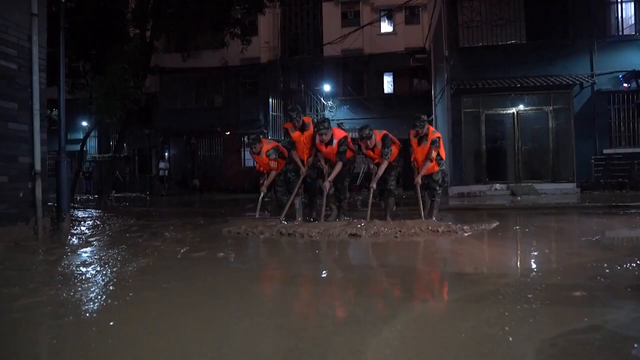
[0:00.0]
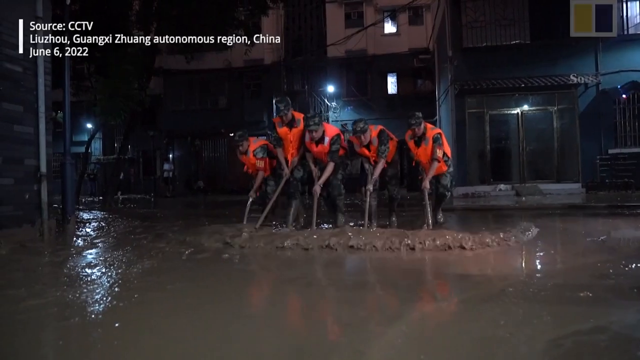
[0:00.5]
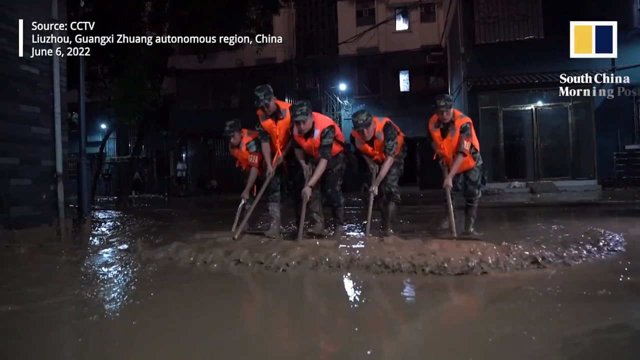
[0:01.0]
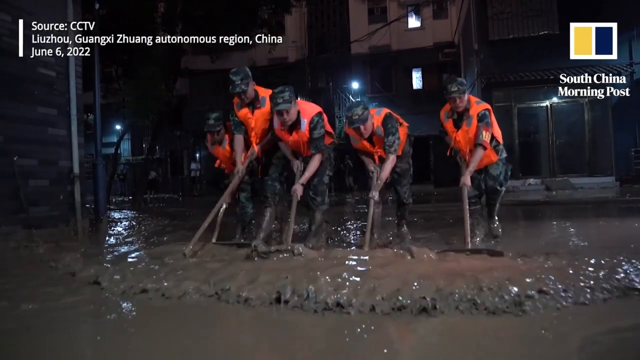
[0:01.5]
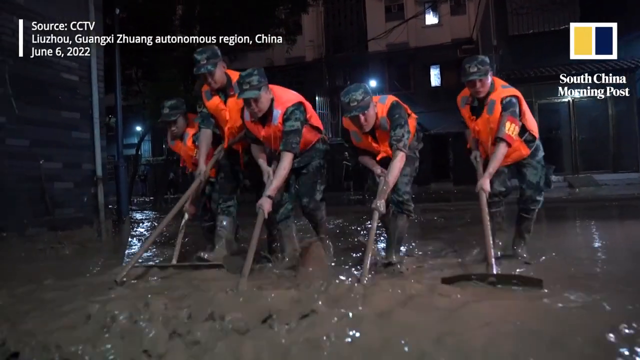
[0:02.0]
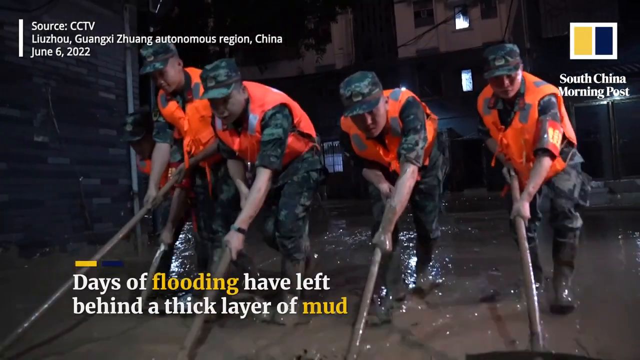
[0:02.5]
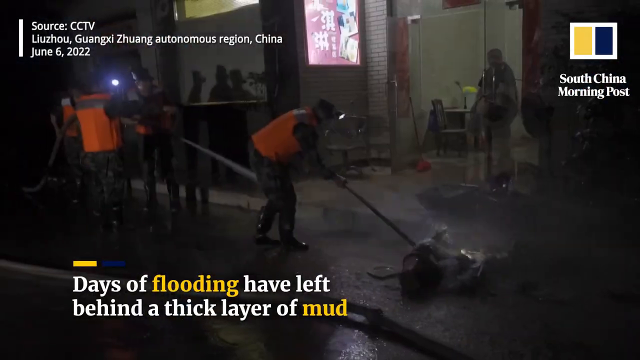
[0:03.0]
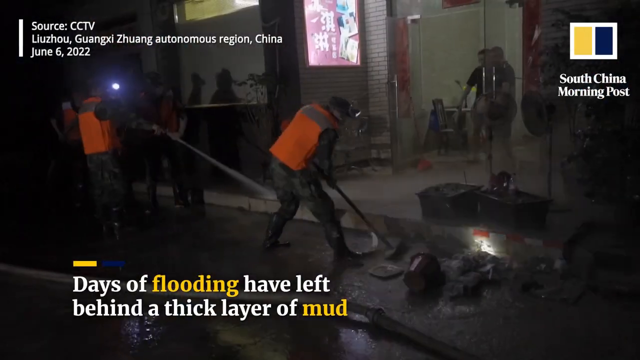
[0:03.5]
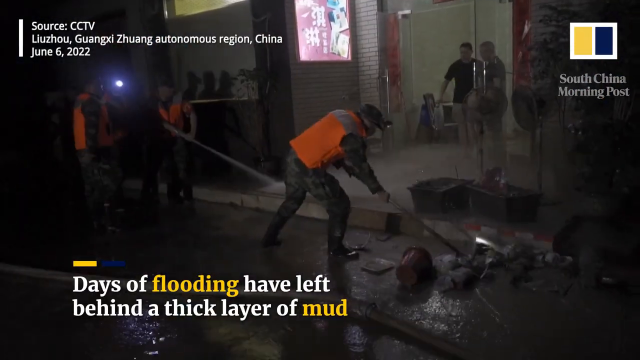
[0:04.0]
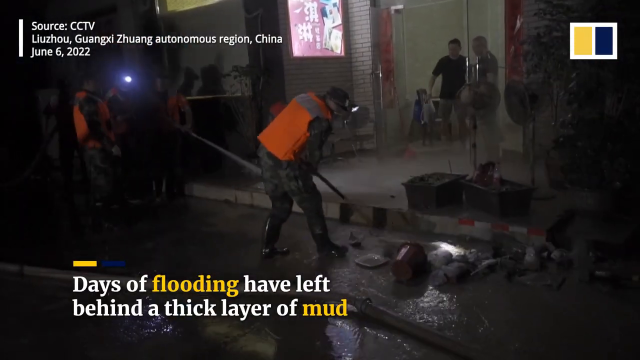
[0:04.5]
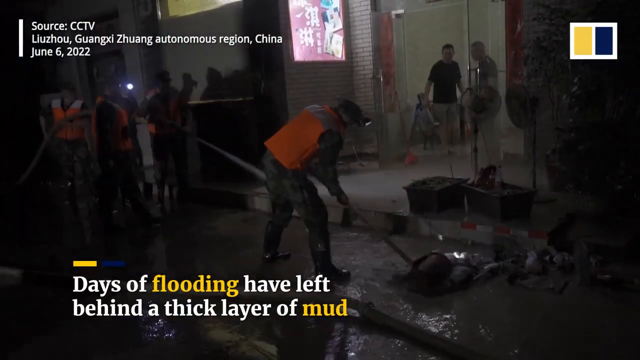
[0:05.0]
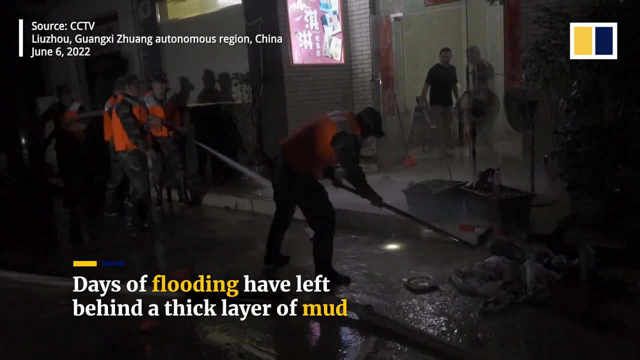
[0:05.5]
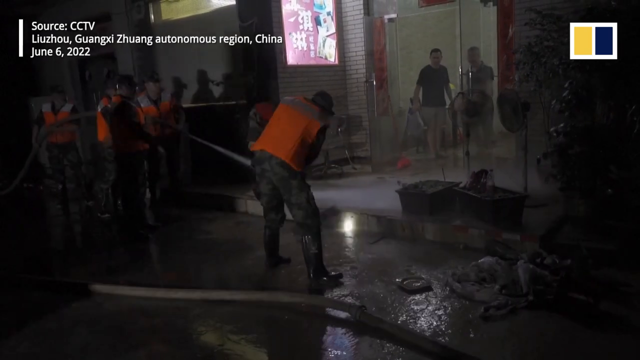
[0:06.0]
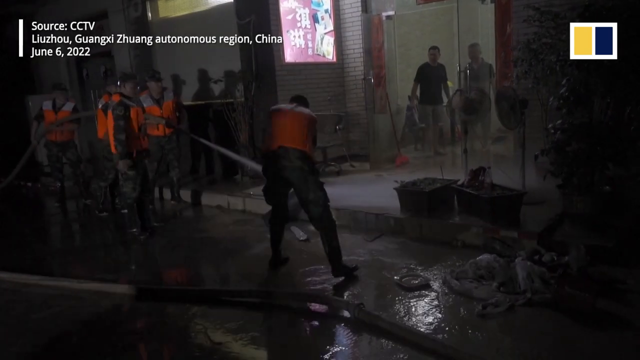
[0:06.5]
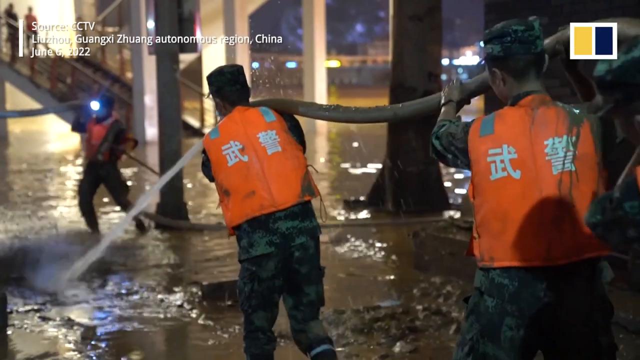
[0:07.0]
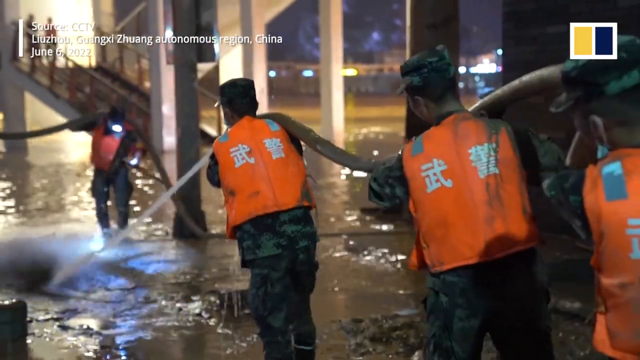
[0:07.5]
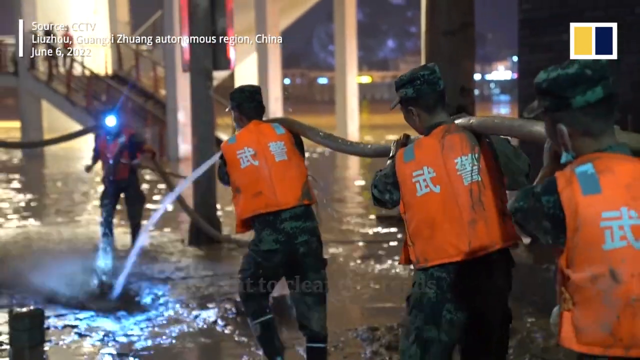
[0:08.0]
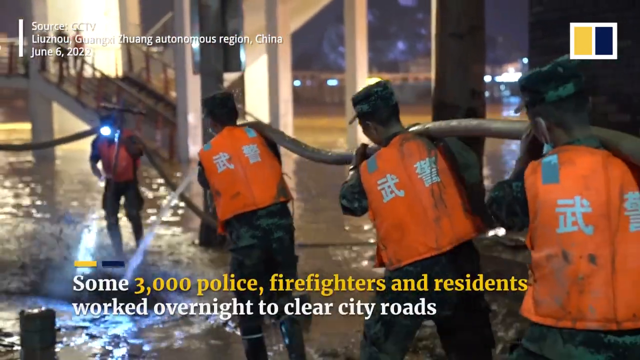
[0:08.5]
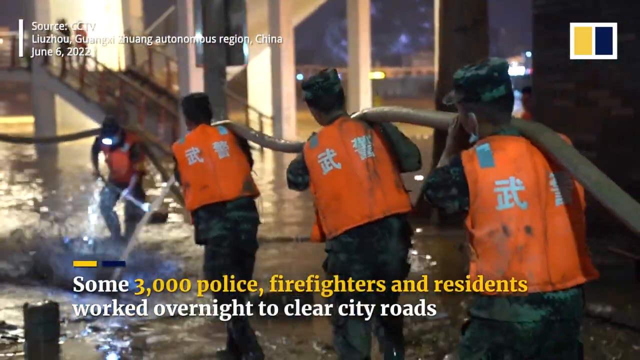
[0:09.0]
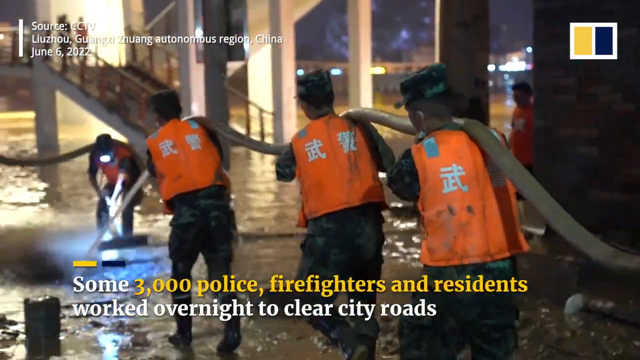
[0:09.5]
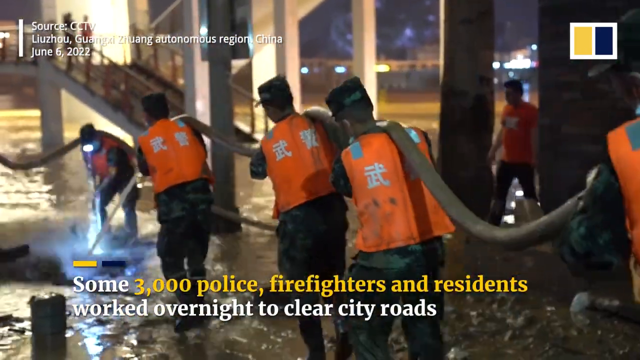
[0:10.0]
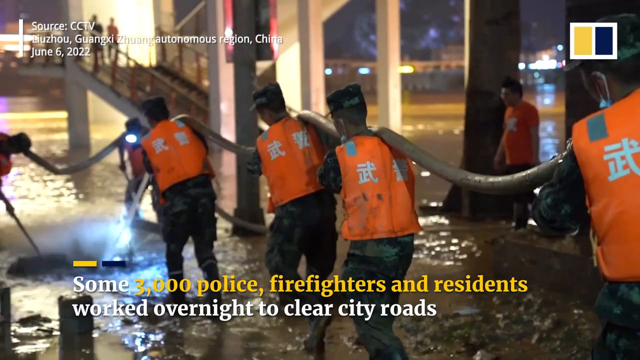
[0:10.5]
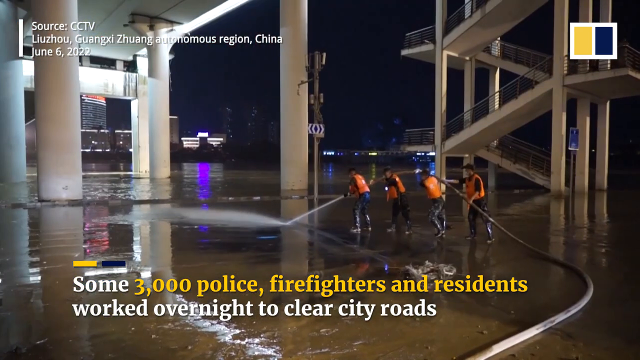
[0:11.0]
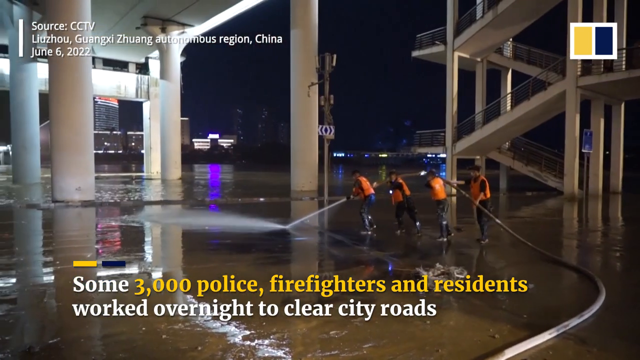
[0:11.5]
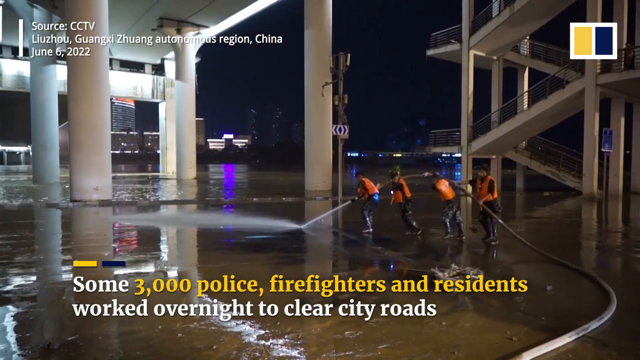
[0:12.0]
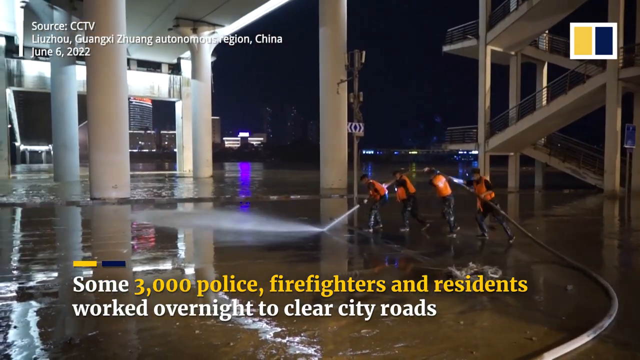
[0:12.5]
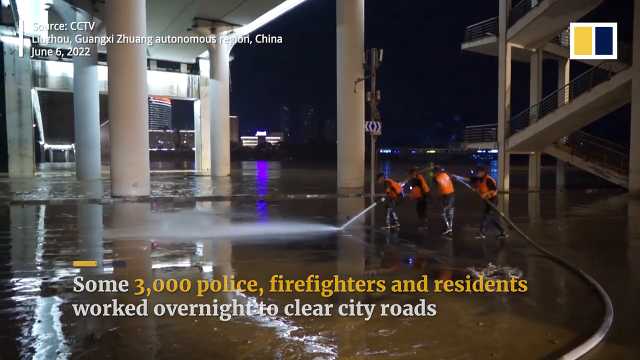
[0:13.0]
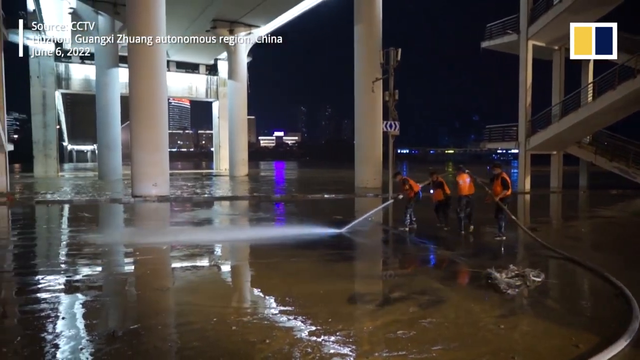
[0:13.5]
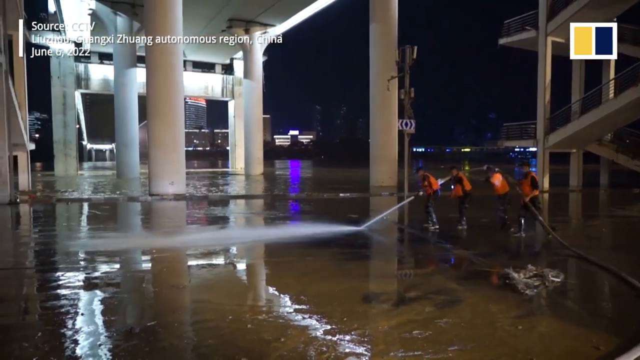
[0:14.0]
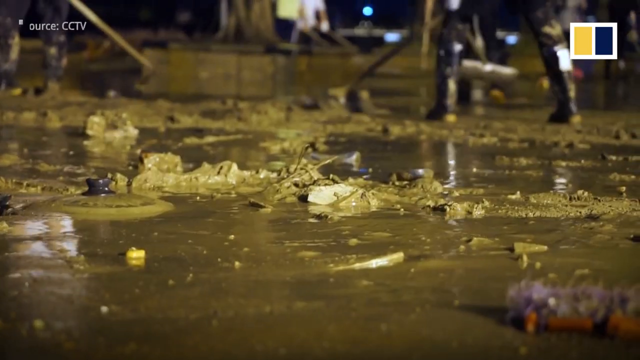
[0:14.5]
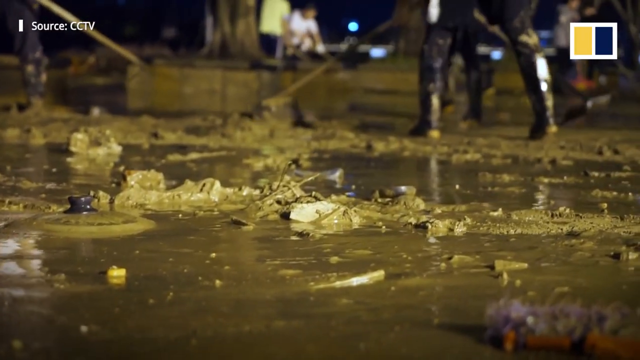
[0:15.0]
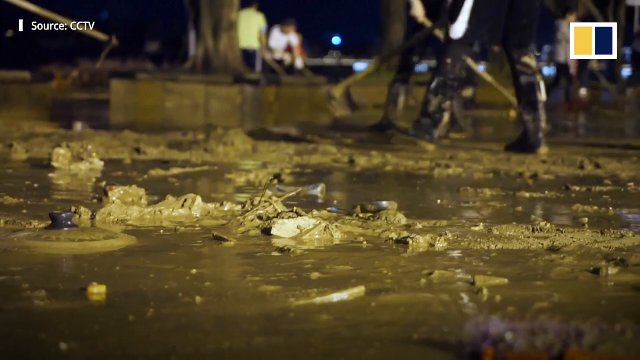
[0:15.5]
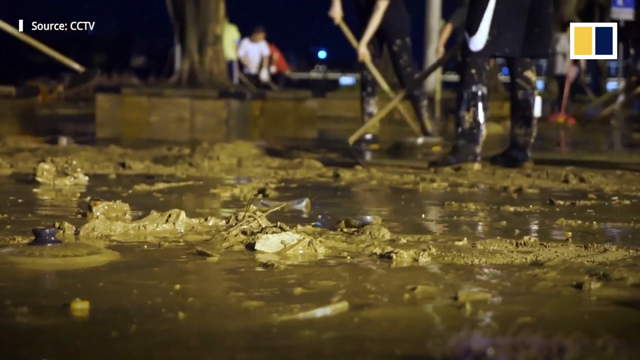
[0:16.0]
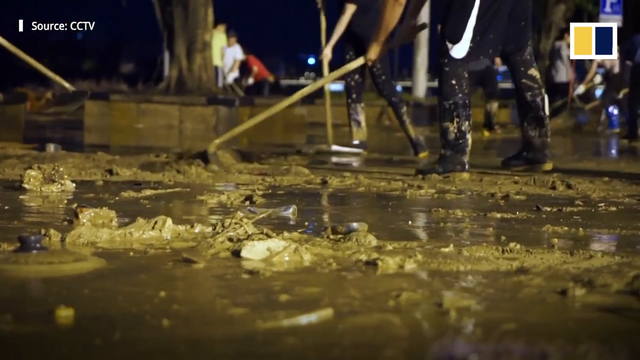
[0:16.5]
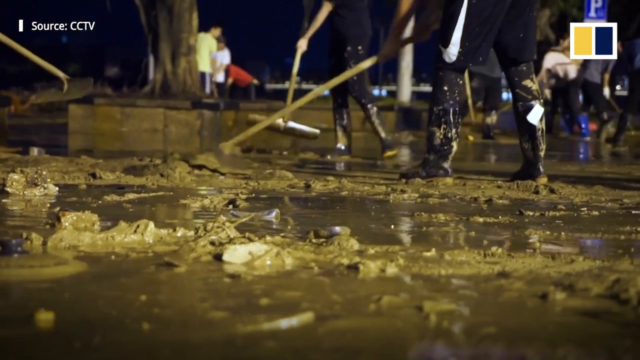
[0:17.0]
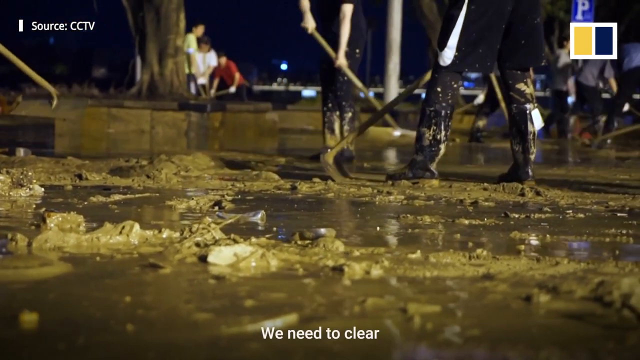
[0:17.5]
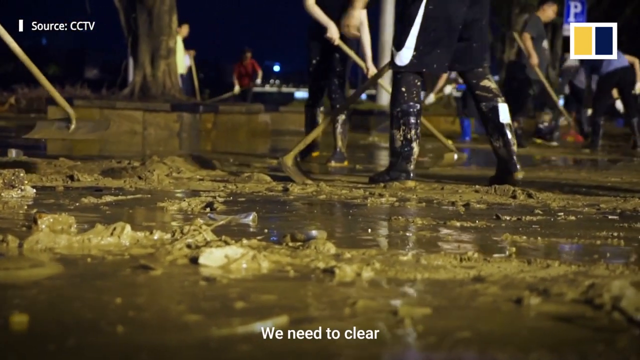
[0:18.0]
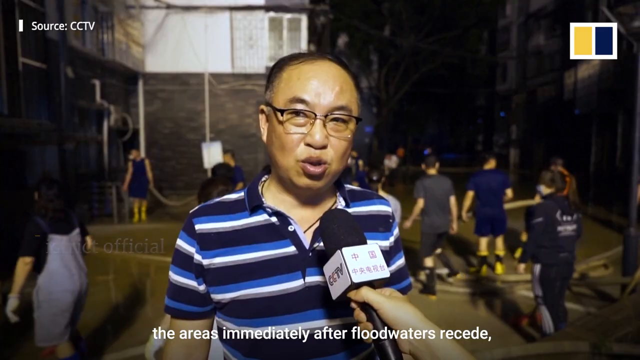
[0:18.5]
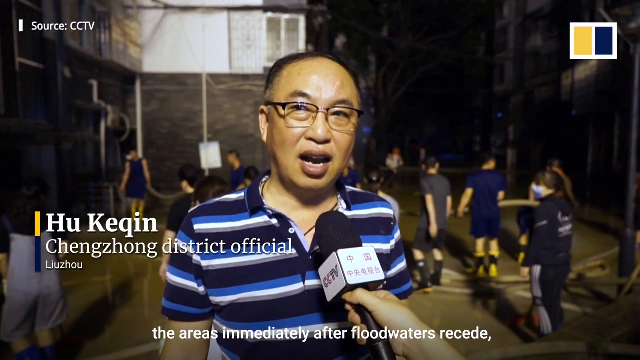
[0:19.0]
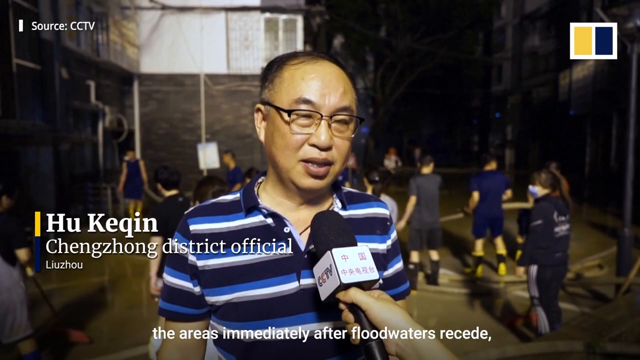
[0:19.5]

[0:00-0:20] What looks like a news report from China about a flood opens with five people in orange vests coming towards the camera. They are holding tools that look almost like little rakes or shovels and are pushing muddy water around, apparently trying to get rid of the water left by a flood. The video cuts to them carrying a large hose on their shoulders, lined up one after another, with water coming out of the hose. A closeup shows the tools moving the water around. News markings appear: "South China Morning Post" in the upper right and "Source CCTV" to the left. Text at the bottom first reads "days of flooding have left behind a thick layer of mud" and then "some 3,000 police firefighters and residents worked overnight to clear city roads". The shot then switches to an individual, apparently about to speak about the flood.